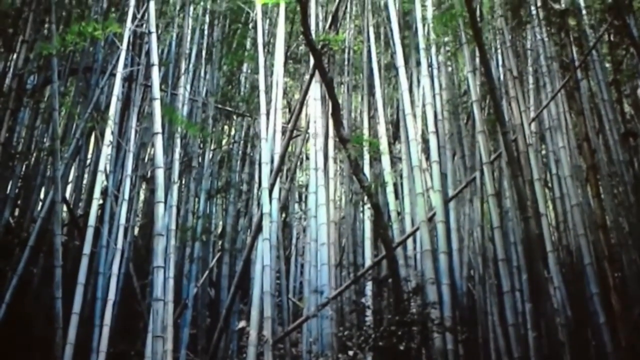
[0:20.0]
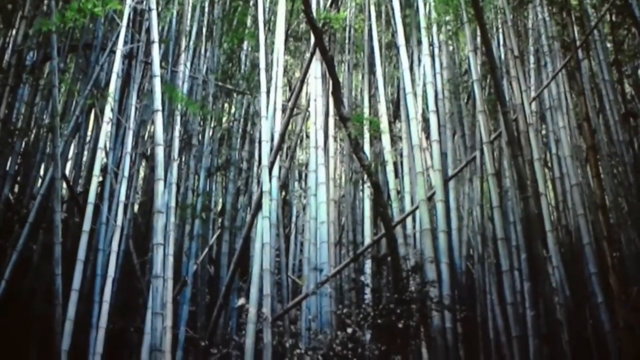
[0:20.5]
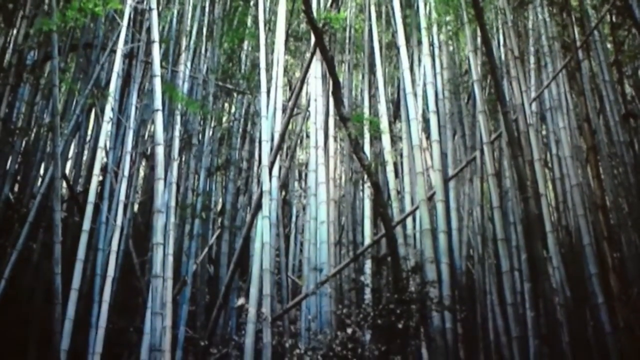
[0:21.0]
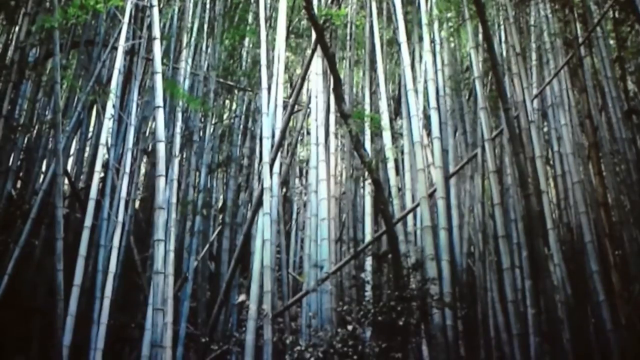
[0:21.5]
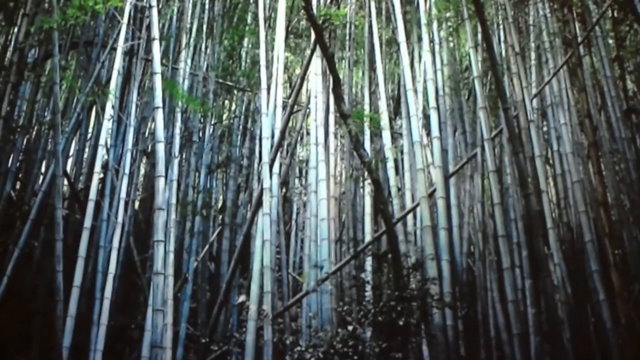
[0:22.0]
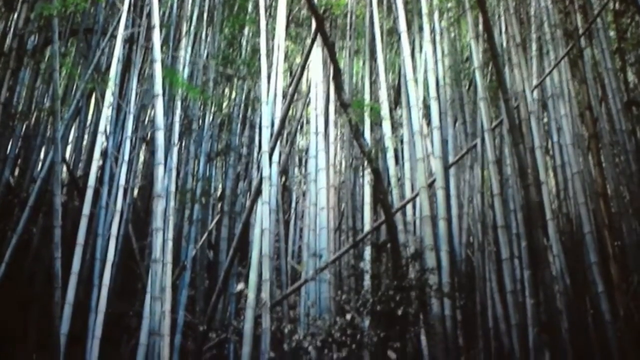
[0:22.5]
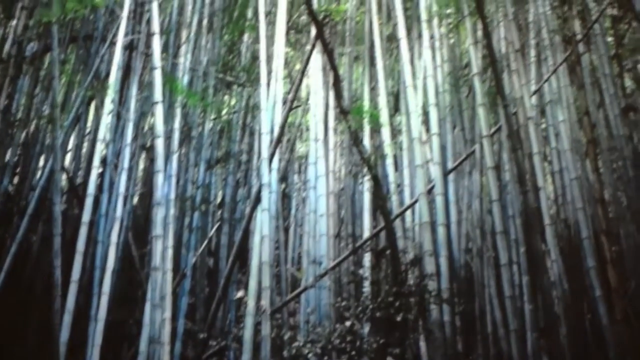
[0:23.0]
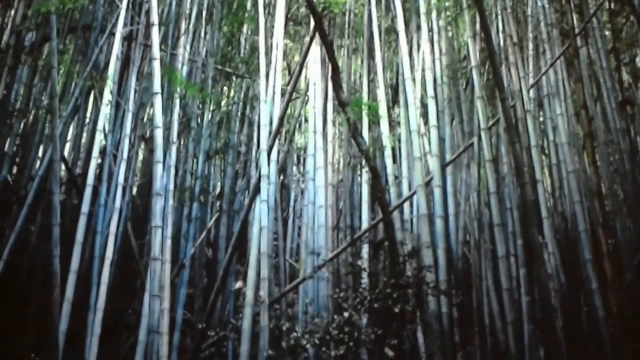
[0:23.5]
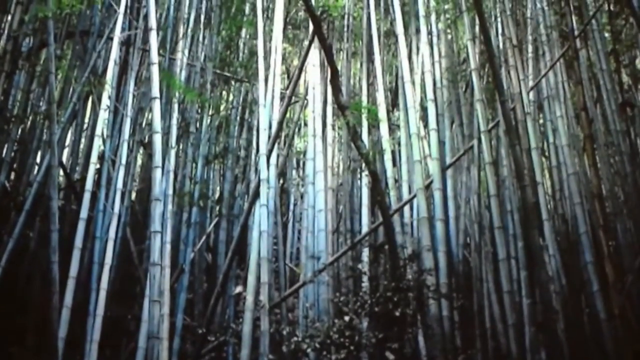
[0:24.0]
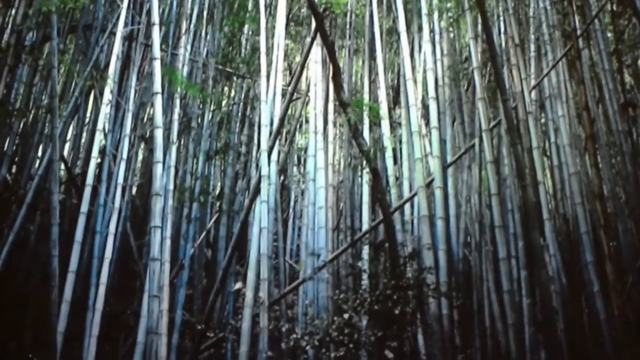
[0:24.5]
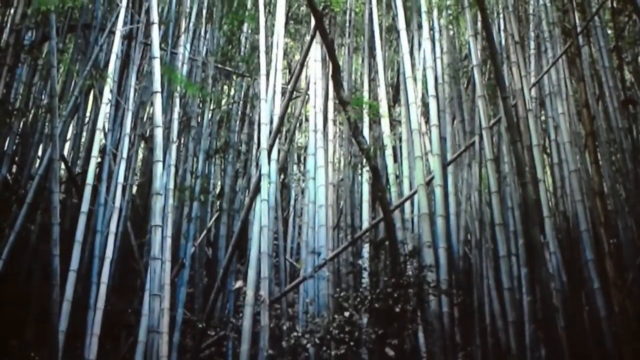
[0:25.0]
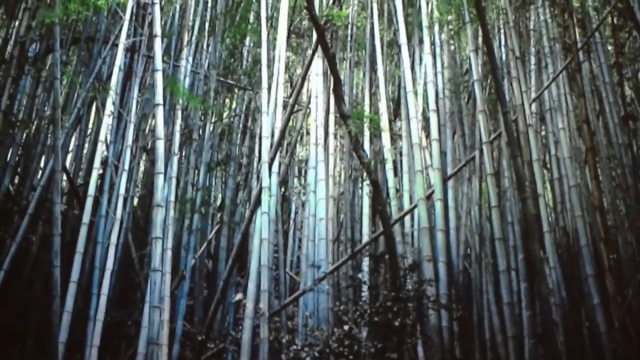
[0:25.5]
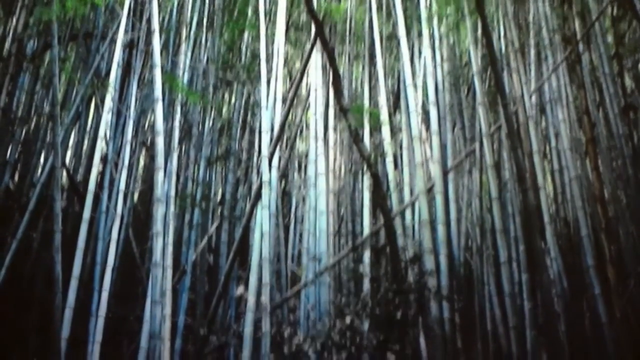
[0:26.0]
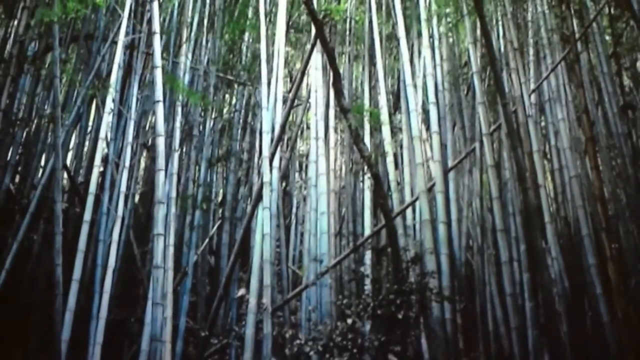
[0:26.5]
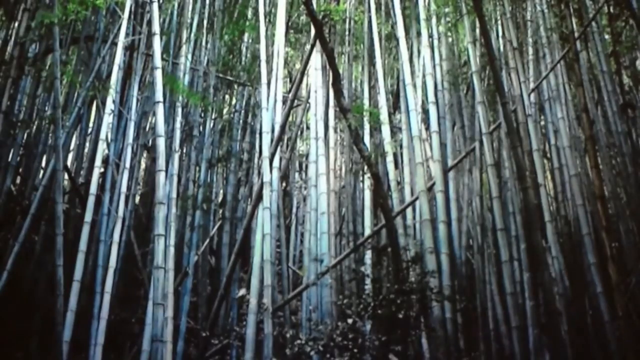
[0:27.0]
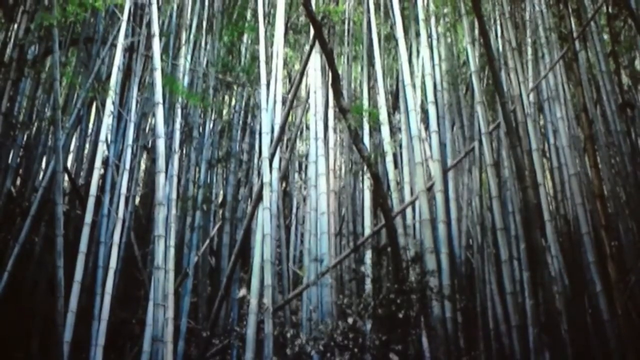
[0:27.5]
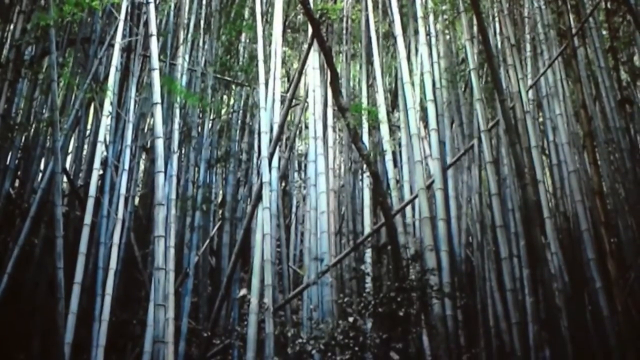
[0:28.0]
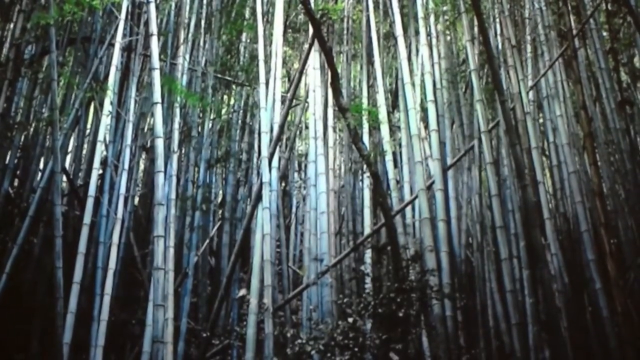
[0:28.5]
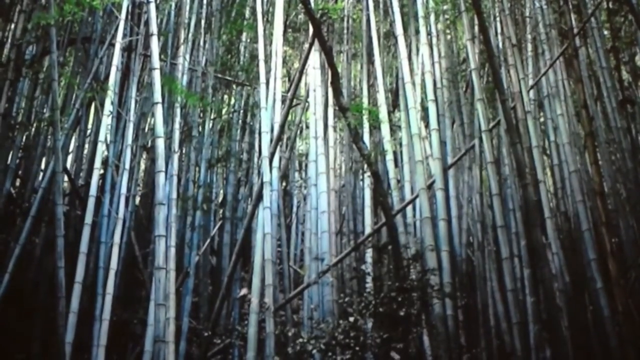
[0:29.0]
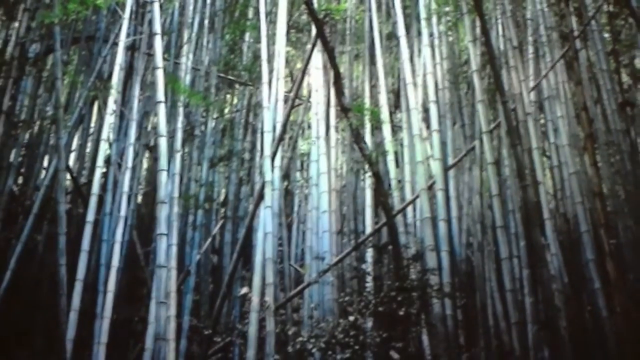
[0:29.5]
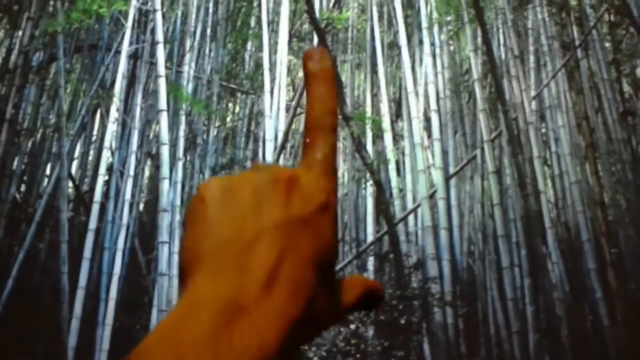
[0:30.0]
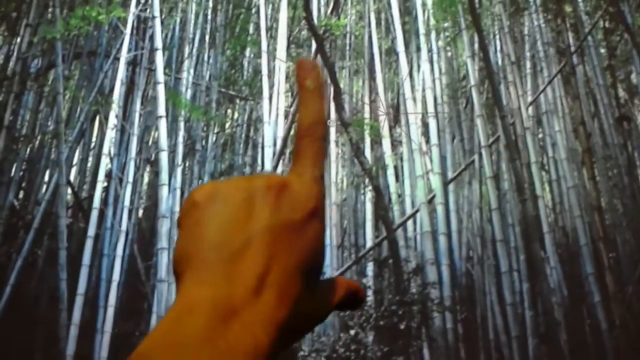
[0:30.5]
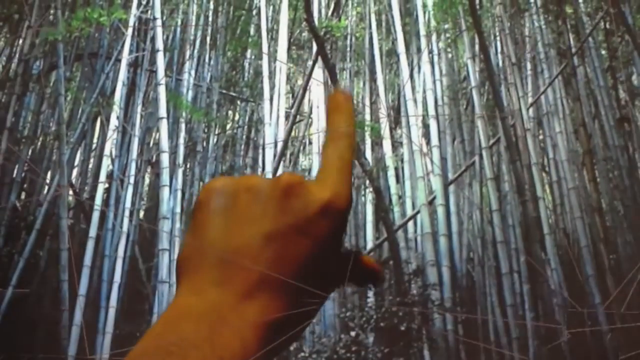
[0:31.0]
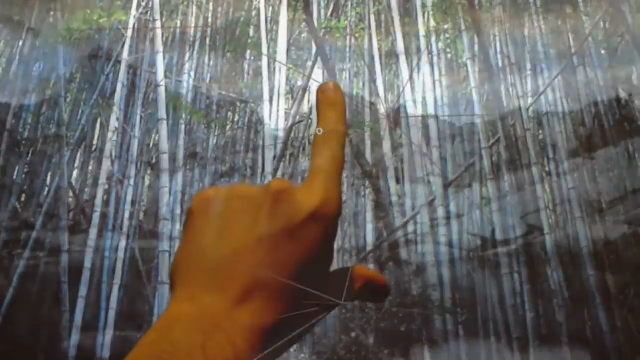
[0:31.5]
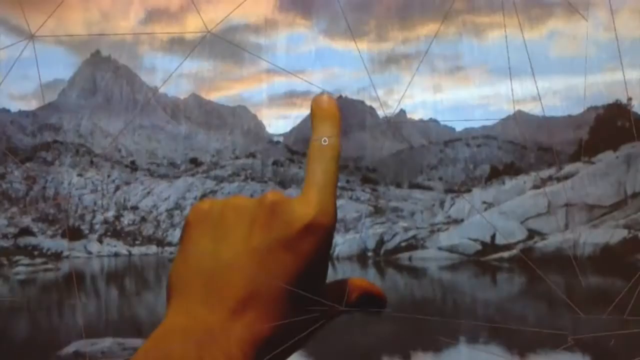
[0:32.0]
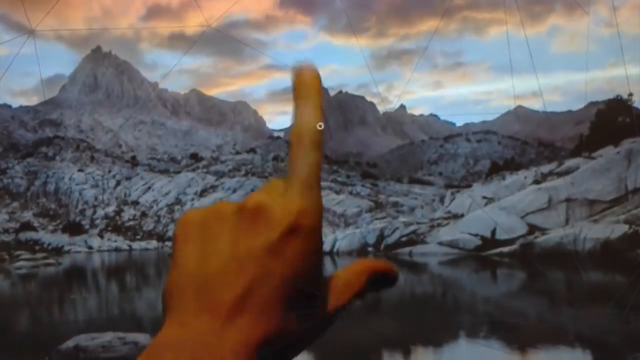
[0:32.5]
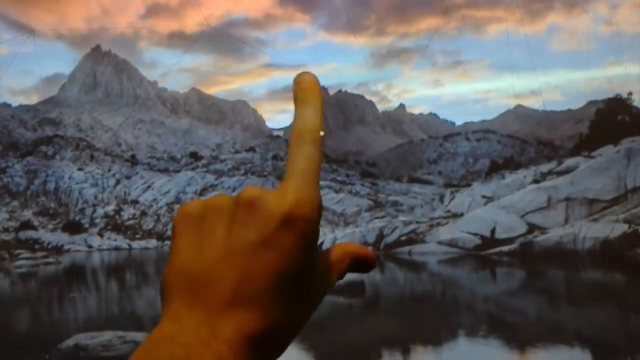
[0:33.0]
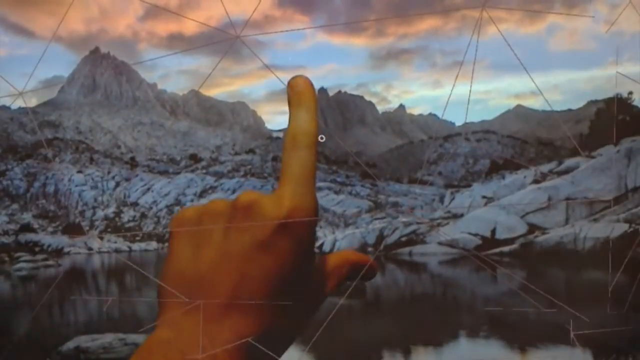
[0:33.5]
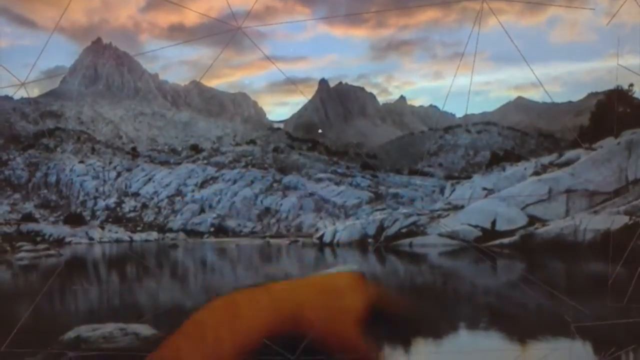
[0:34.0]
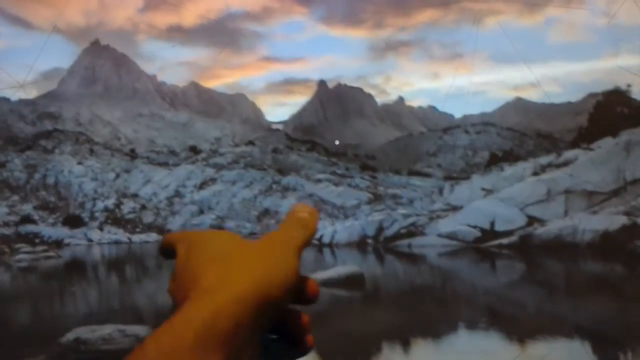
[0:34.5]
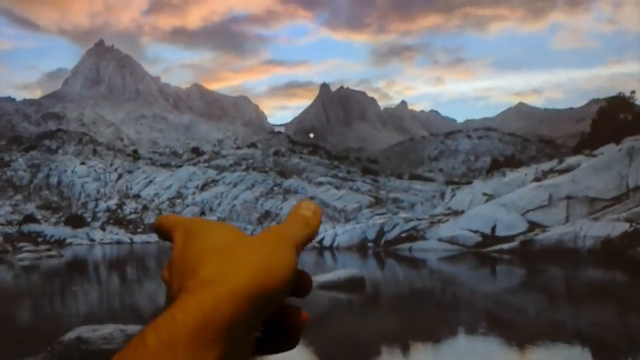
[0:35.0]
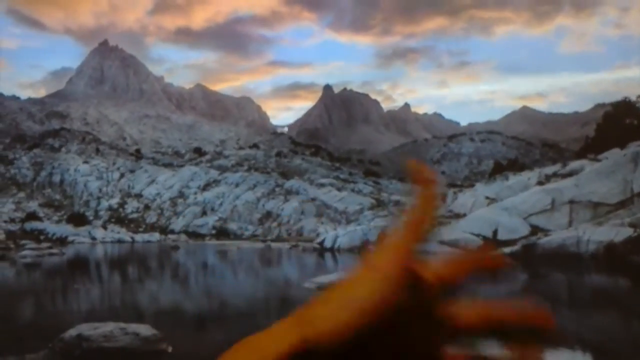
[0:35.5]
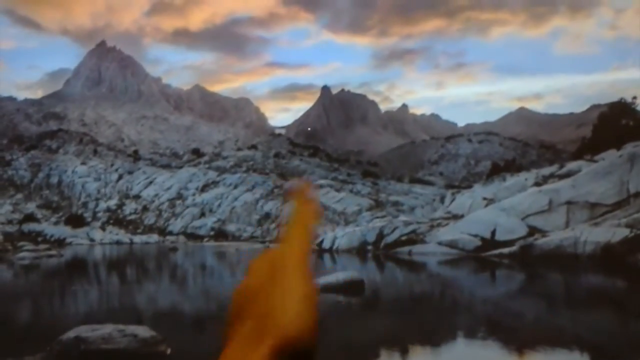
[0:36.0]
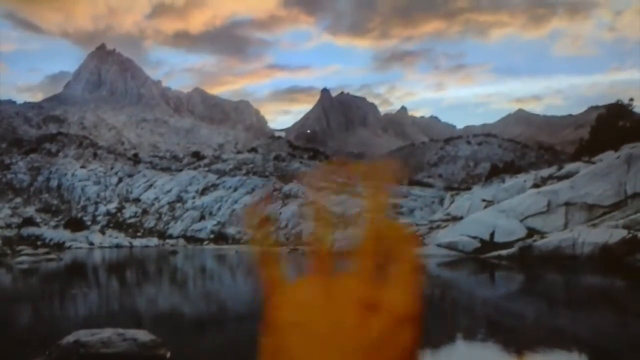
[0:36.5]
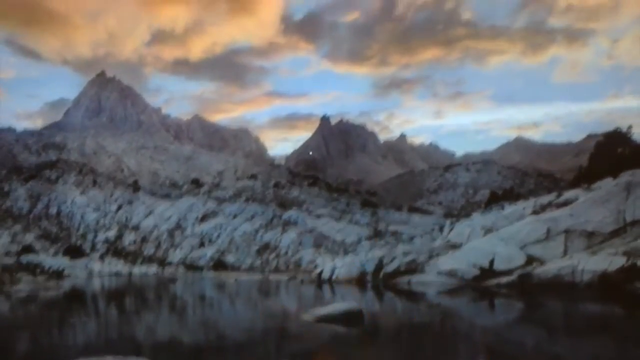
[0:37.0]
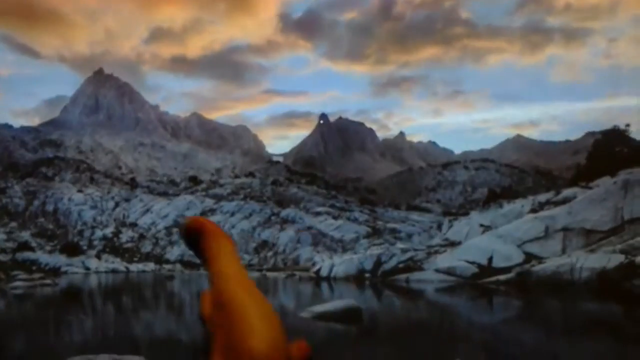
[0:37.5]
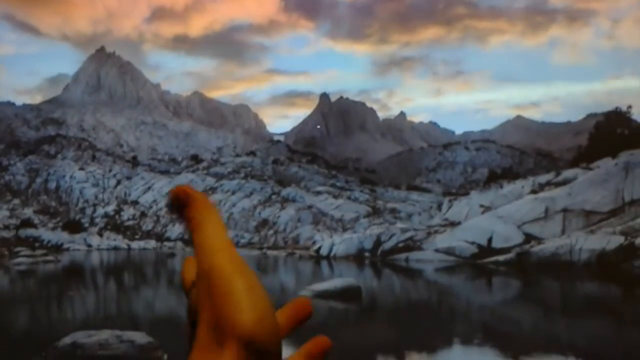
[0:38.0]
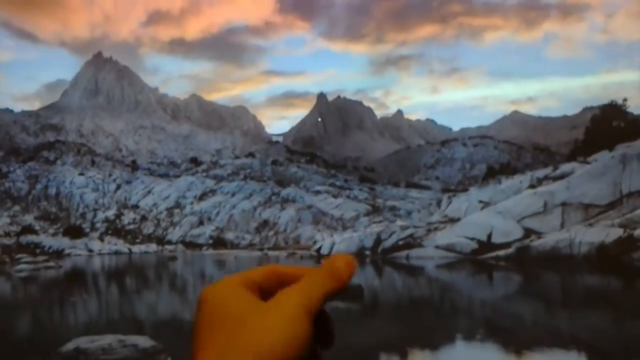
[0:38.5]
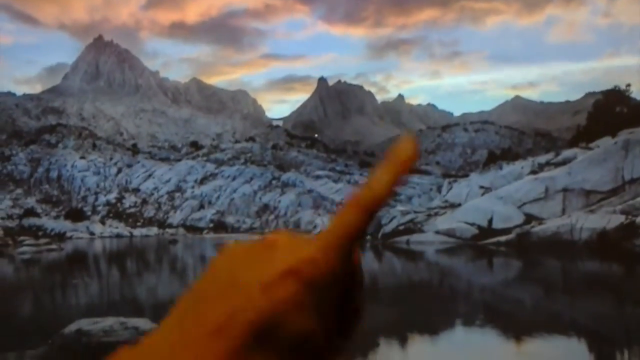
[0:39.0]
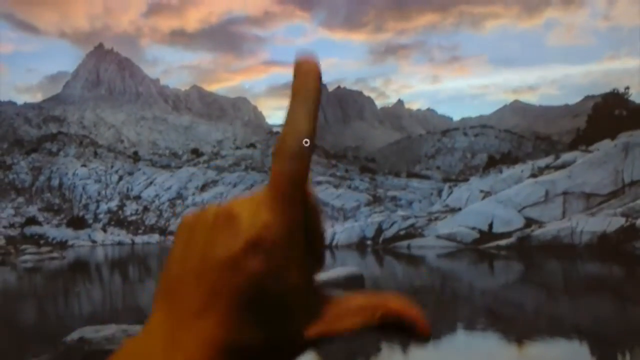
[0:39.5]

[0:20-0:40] The view shows what looks like a bamboo forest, with many vertical white and light brown bamboo shoots running from the bottom to the top of the frame. A few have fallen and run from the bottom middle toward the top right, leaning on the other bamboo. The scene looks like a virtual animation at first. A left hand appears from the bottom left in what looks like a first-person perspective, showing the back of the hand, and pinches its index finger and thumb together. The video transitions to another scene that looks like a snowy landscape: white mountains in the background, snowy ground in the foreground, a lake in front, and the sky at the top. The left hand pinches again, and then what looks like lines forming polygons appear all over the frame. The hand does a counterclockwise twirl with its index finger and thumb stretched out, then opens all its fingers and rotates the open palm counterclockwise, and then stretches out the index finger and thumb to make almost an L shape.